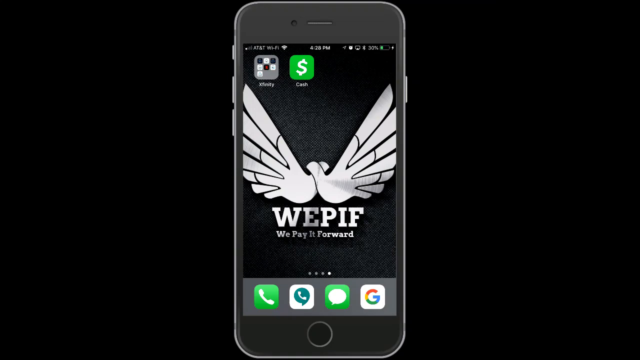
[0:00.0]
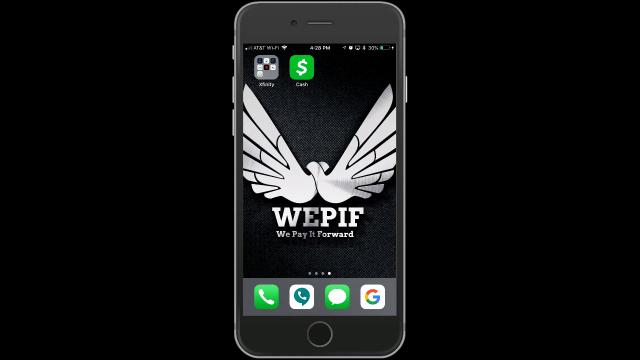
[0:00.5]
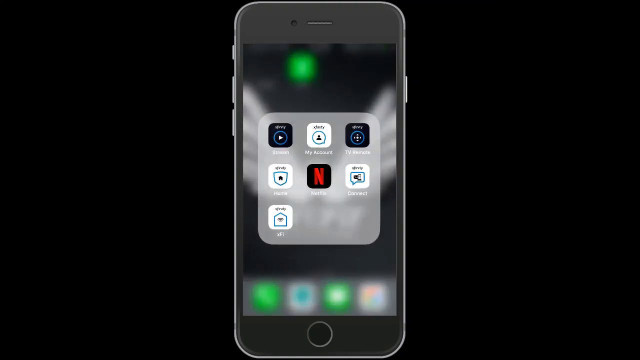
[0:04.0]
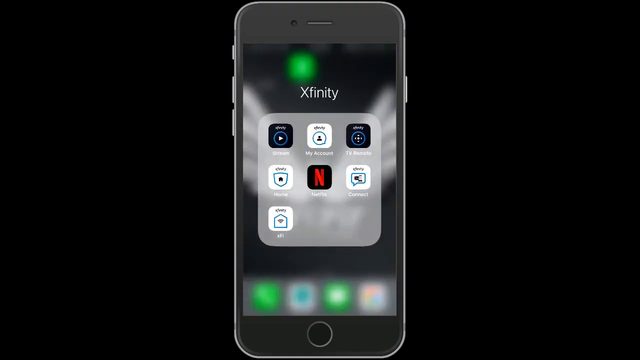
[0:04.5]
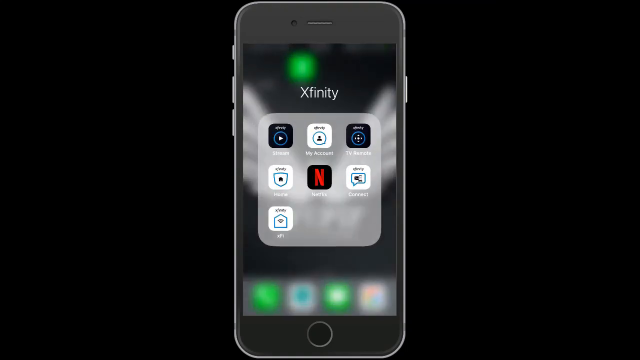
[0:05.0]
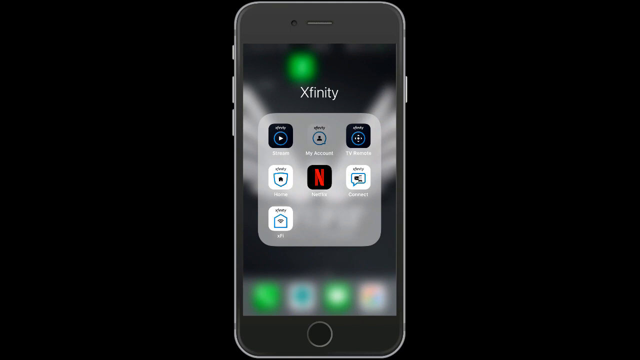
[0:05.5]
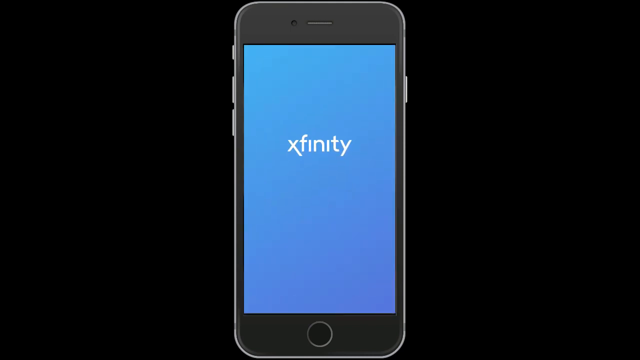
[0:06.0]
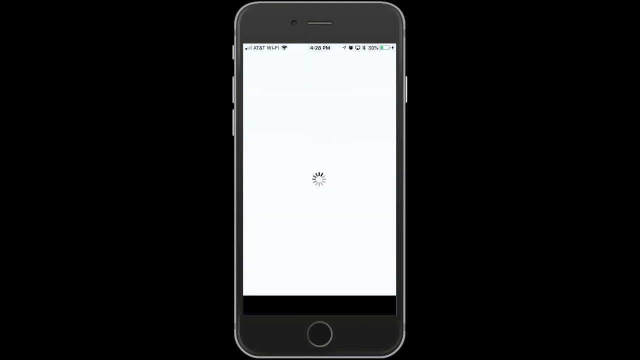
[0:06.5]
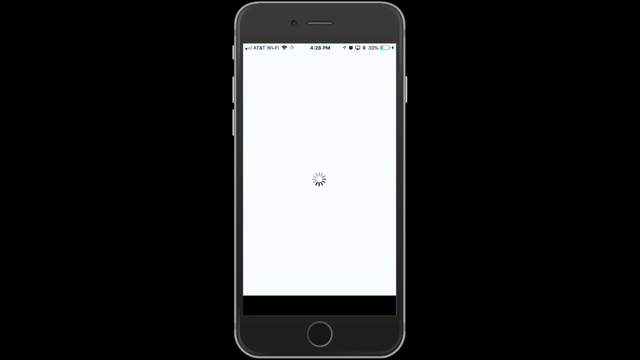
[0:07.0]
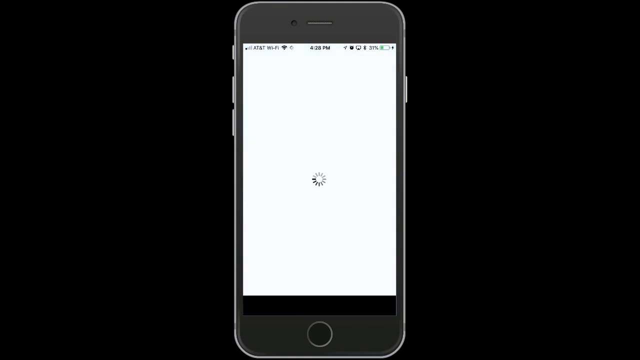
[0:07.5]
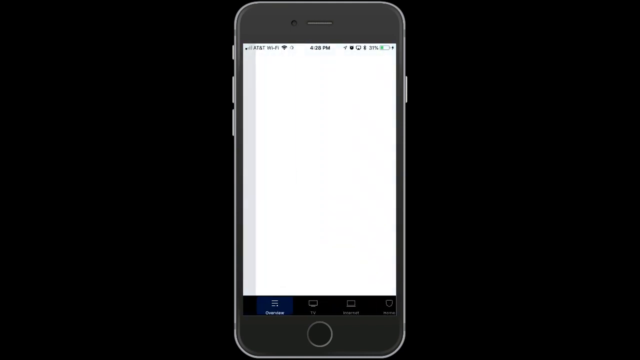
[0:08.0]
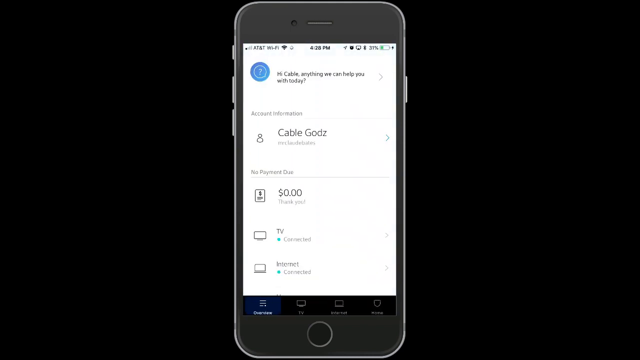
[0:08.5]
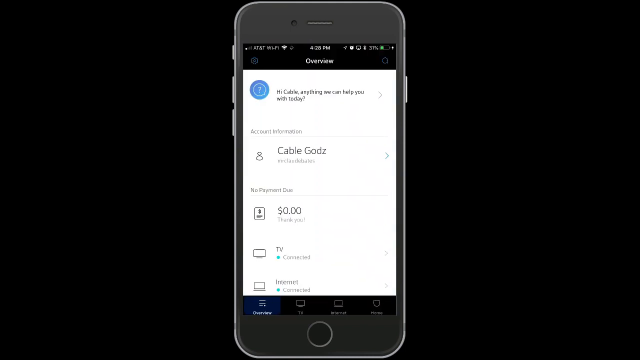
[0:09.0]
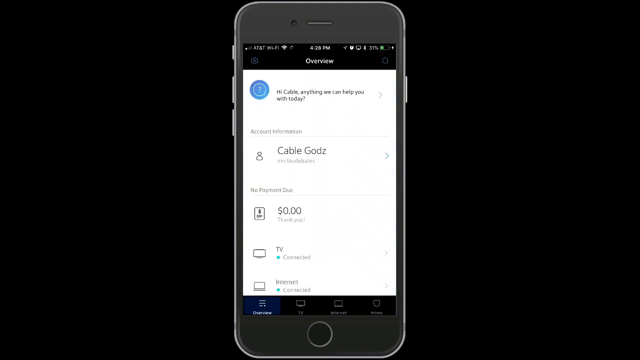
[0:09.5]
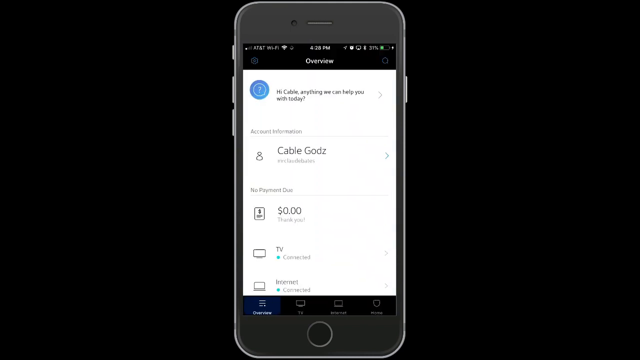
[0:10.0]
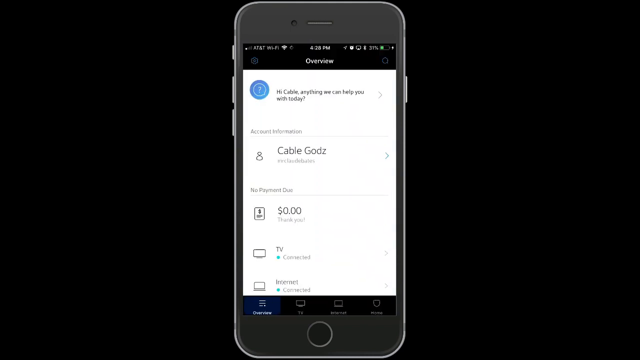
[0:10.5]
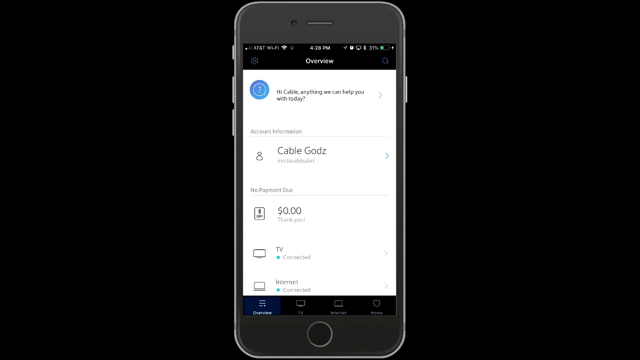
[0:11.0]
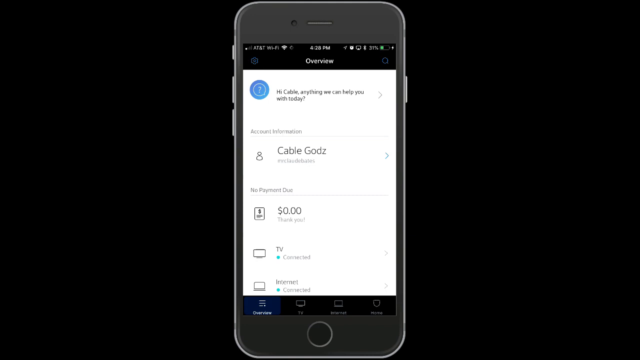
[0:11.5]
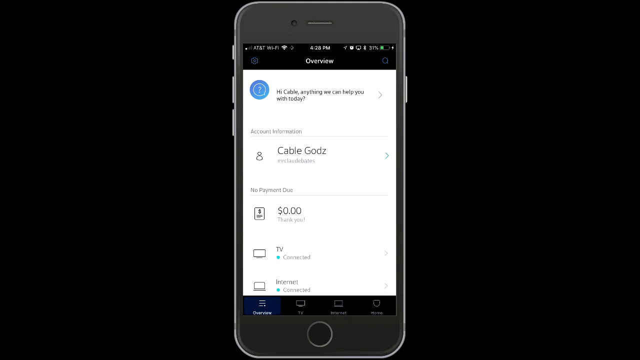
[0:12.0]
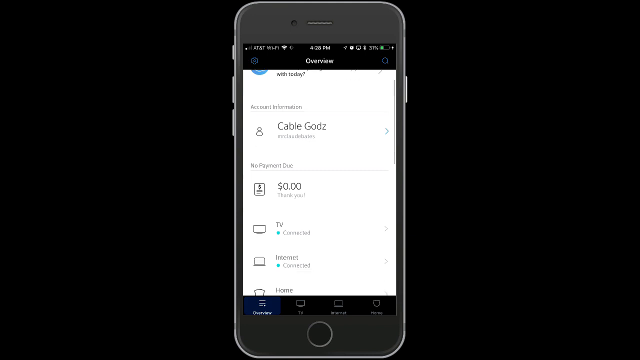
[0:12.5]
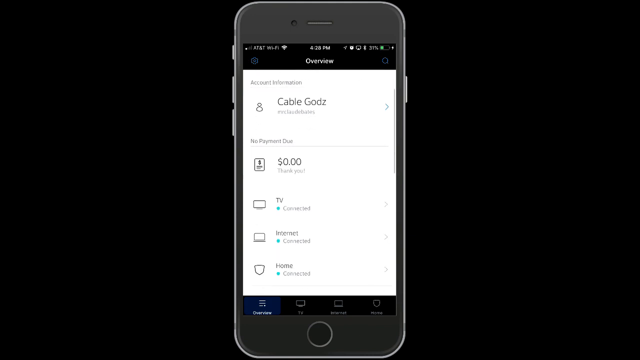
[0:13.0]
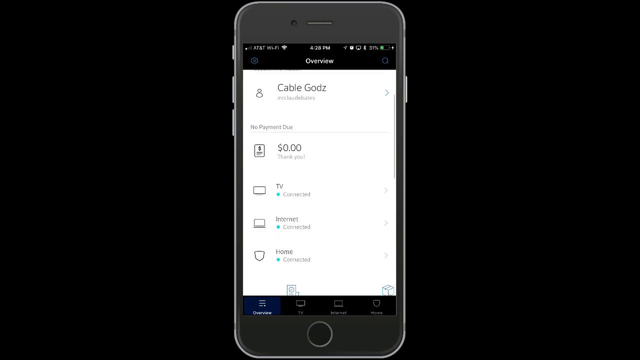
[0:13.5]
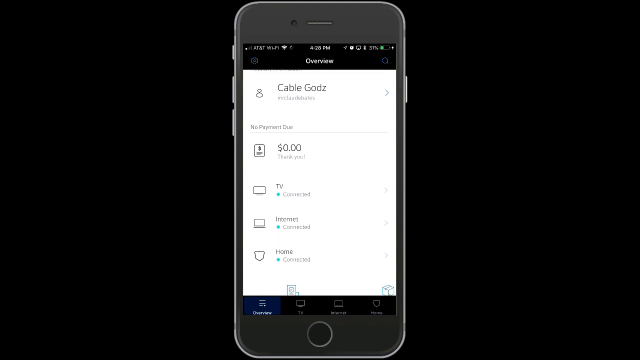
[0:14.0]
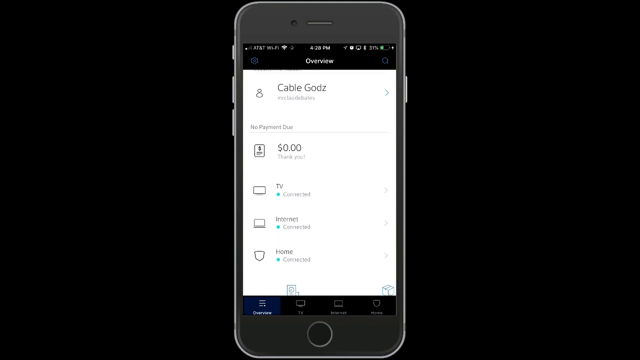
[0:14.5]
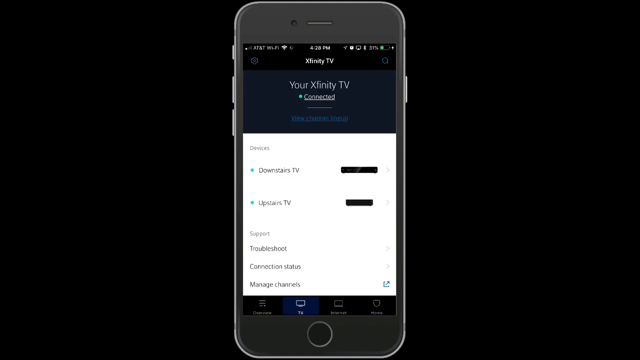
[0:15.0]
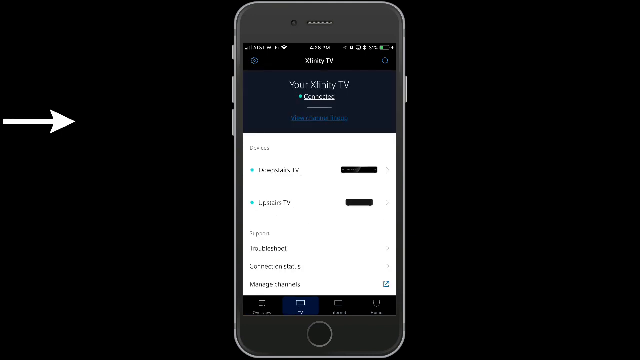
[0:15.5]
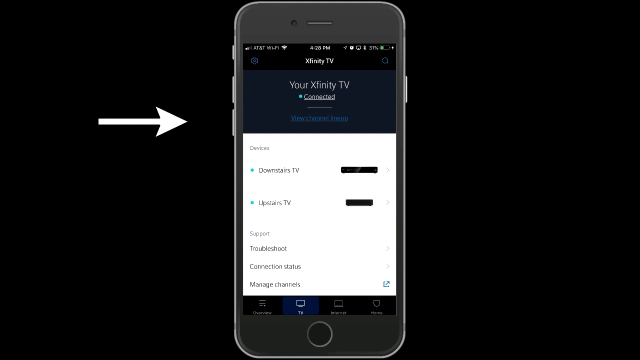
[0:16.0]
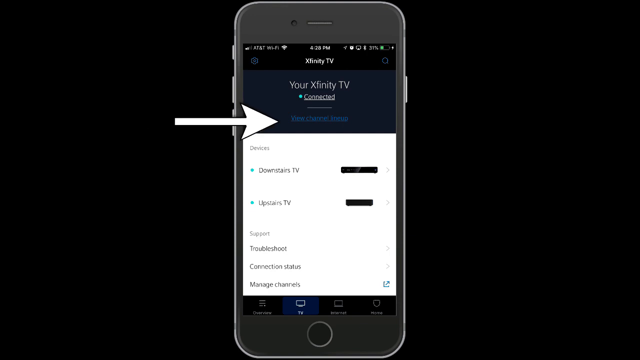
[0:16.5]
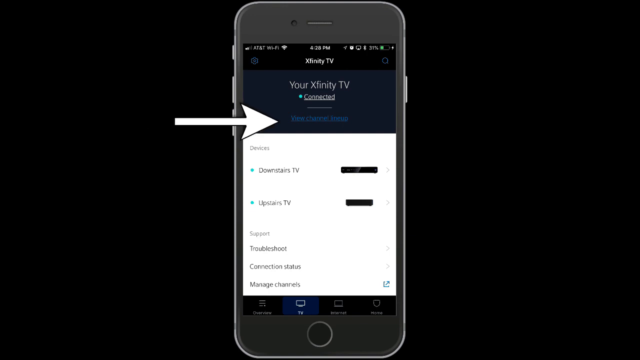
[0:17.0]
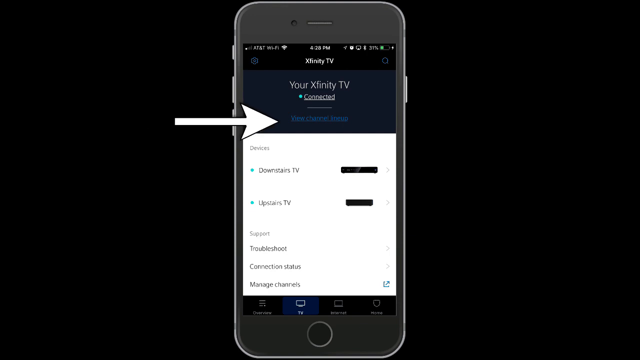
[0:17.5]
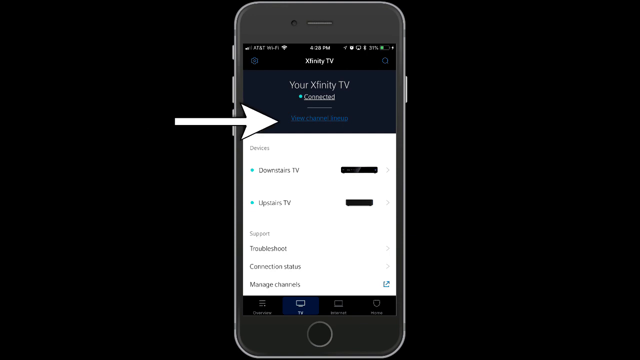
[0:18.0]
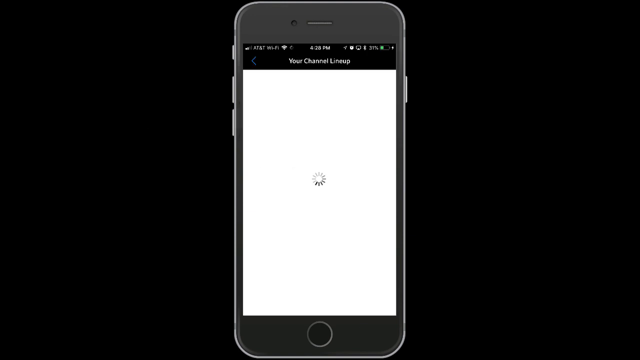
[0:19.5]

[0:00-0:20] A black smartphone is shown. Its screen displays a background with two hands in a circle, designed to look like angel wings. Underneath the wings are the letters "WEPIN", and underneath that "we pay it forward" is written in a silver metallic colour. At the bottom of the phone are icons for phone, texting, WhatsApp and Gmail or Google. The view transitions to a screen labelled "Xfinity" with icons for Netflix, e-mail and other apps. Next comes a blue background with "Xfinity" written in white, followed by a loading screen. It loads to show the inside of an app, with a profile labelled "Cable Guards". One tab shows an amount of zero. TV and Internet are both shown as connected, and after a transition Xfinity TV is shown as connected. An arrow appears, pointing to text written in light blue.